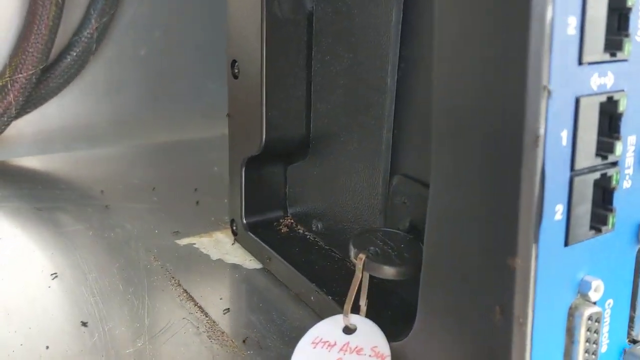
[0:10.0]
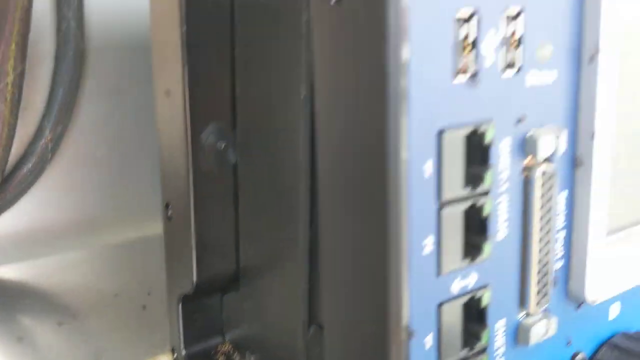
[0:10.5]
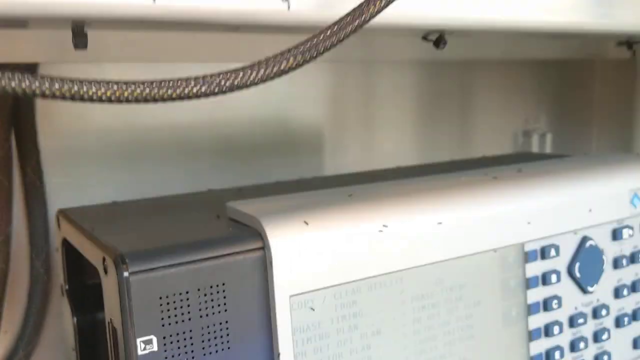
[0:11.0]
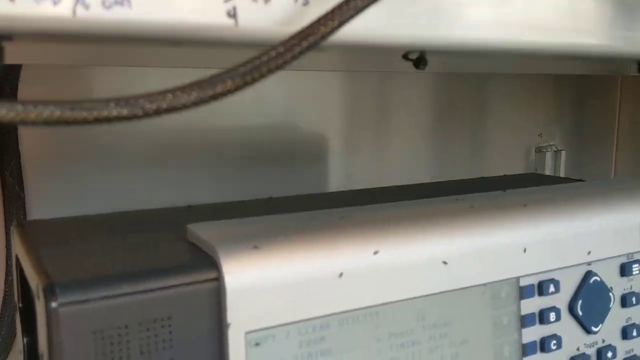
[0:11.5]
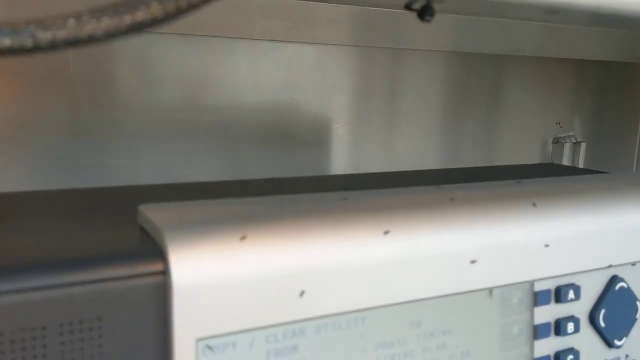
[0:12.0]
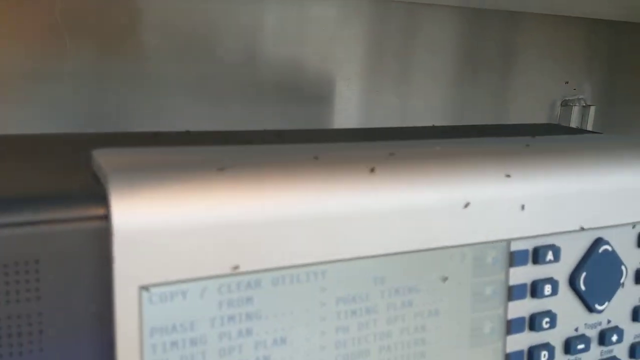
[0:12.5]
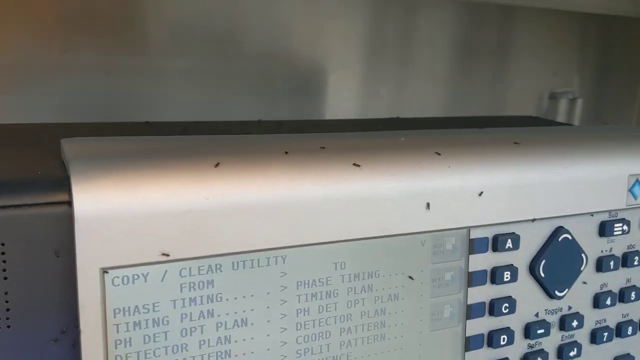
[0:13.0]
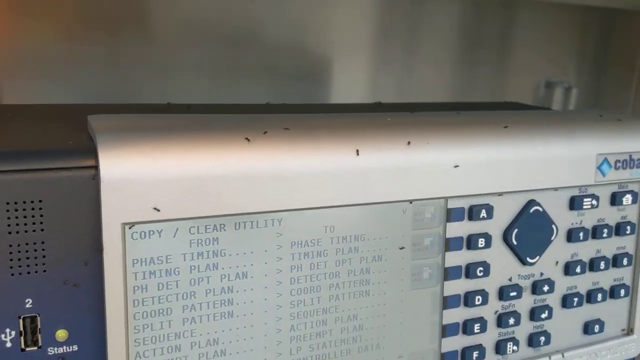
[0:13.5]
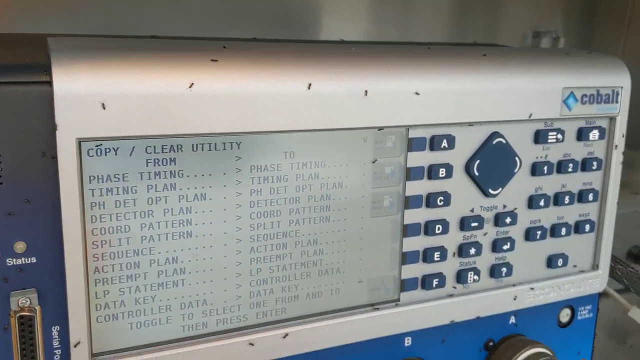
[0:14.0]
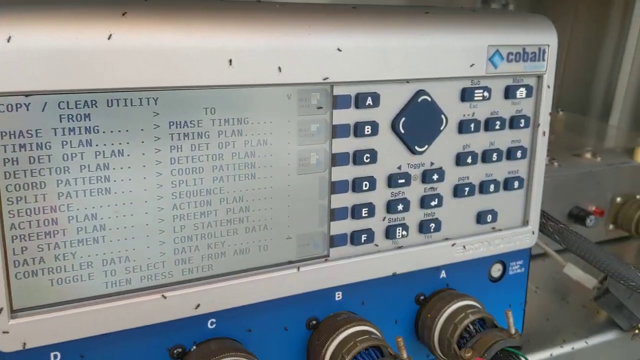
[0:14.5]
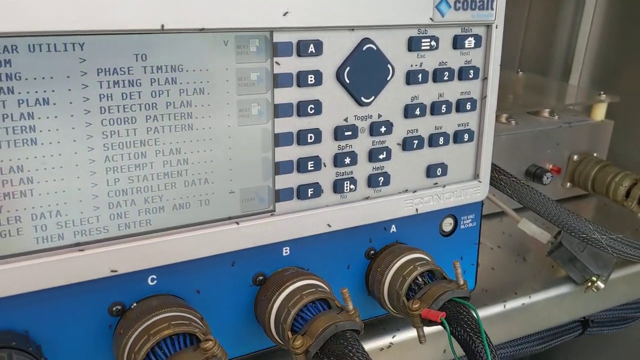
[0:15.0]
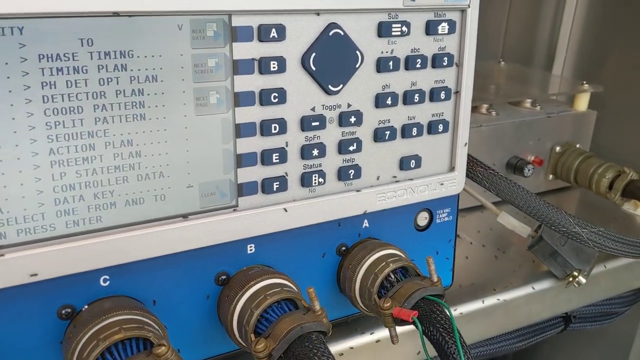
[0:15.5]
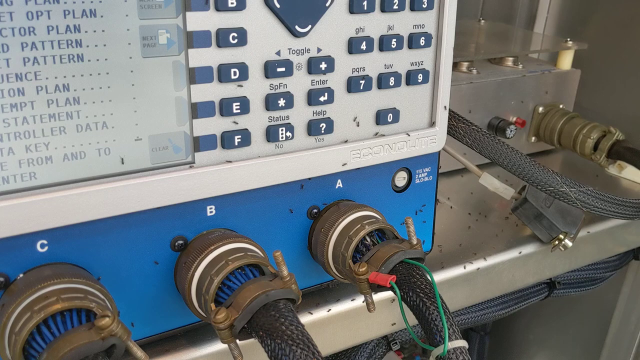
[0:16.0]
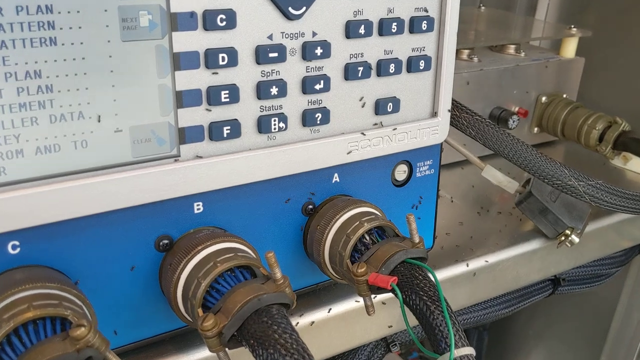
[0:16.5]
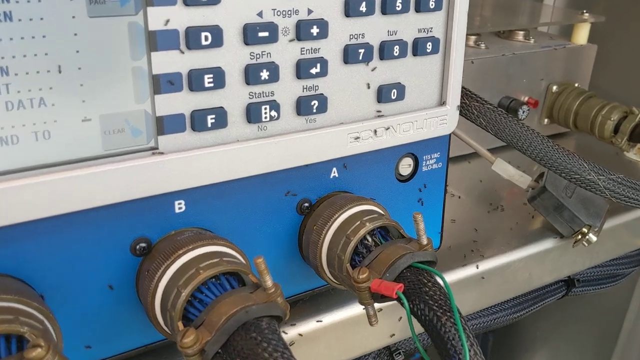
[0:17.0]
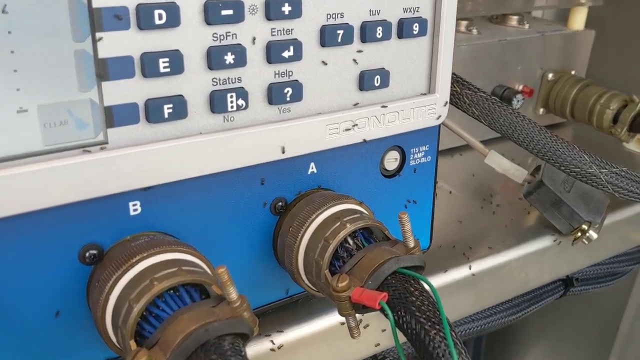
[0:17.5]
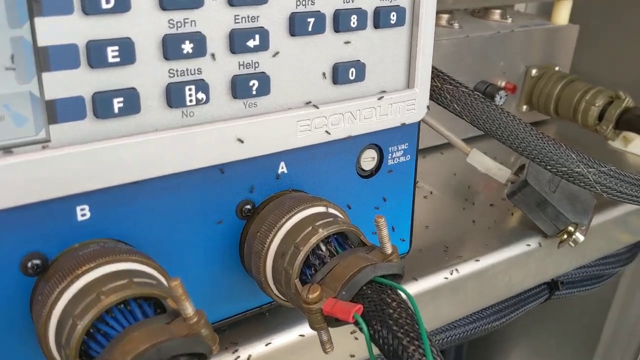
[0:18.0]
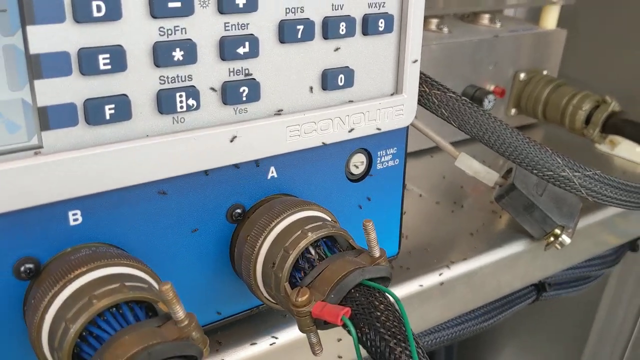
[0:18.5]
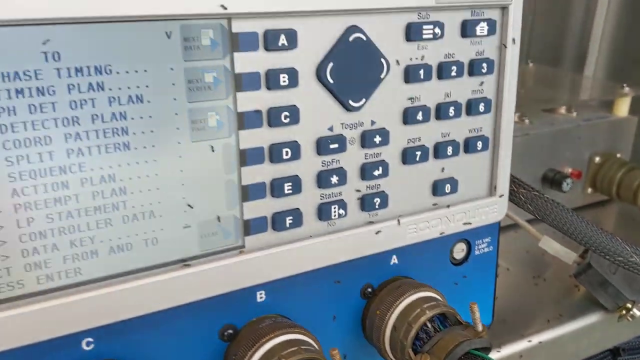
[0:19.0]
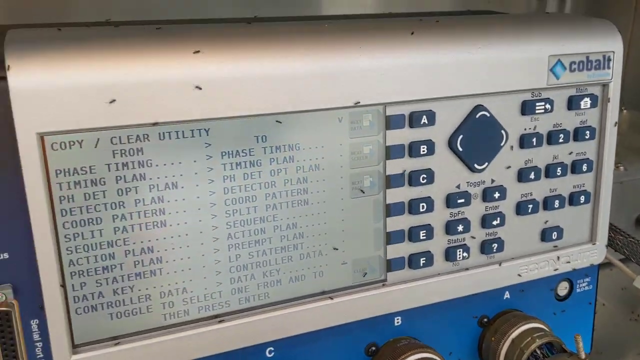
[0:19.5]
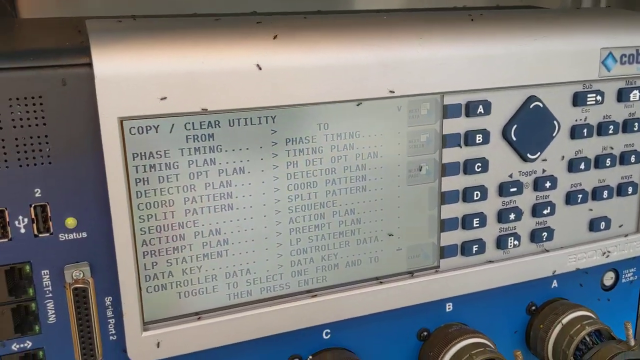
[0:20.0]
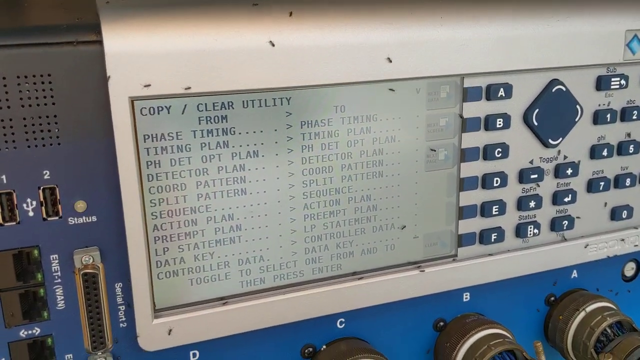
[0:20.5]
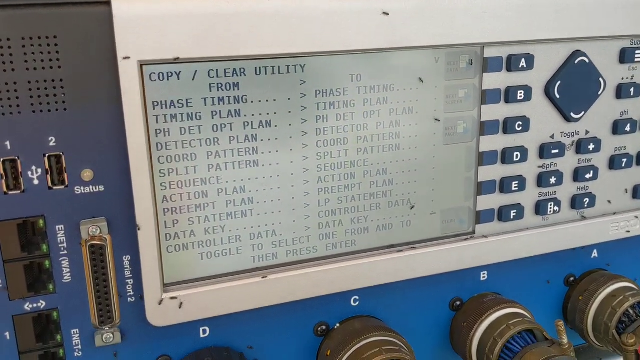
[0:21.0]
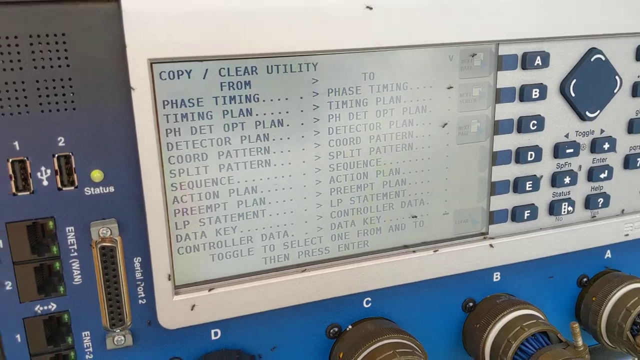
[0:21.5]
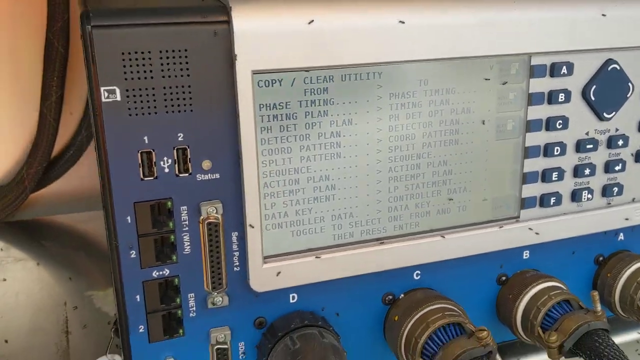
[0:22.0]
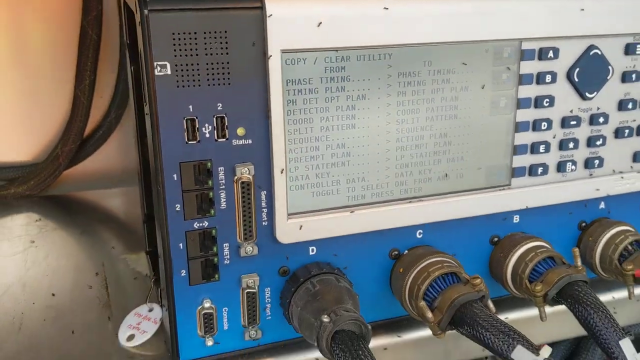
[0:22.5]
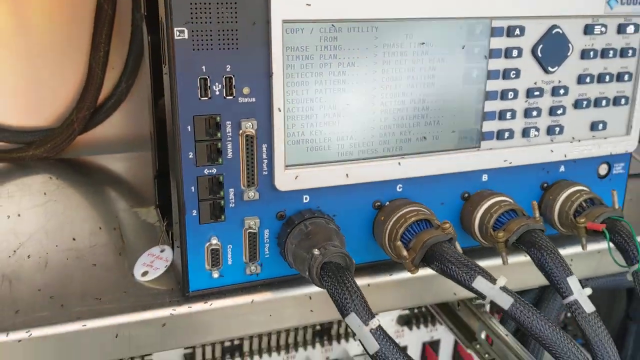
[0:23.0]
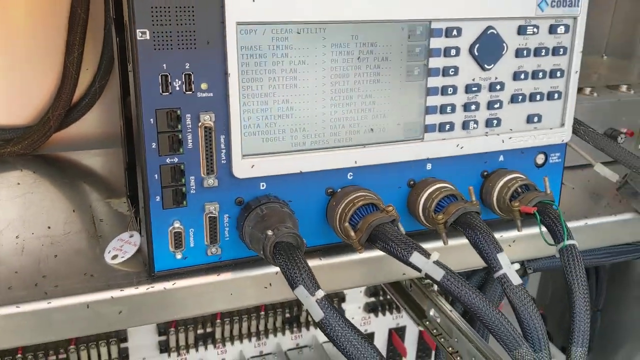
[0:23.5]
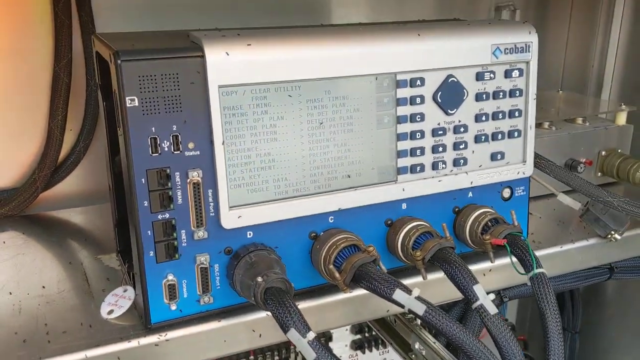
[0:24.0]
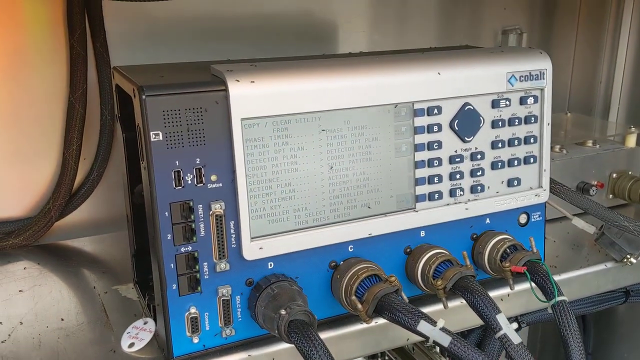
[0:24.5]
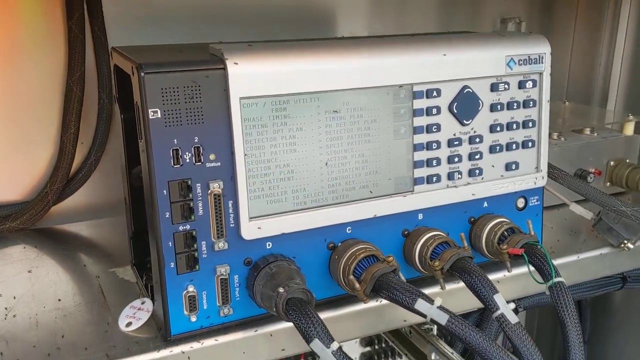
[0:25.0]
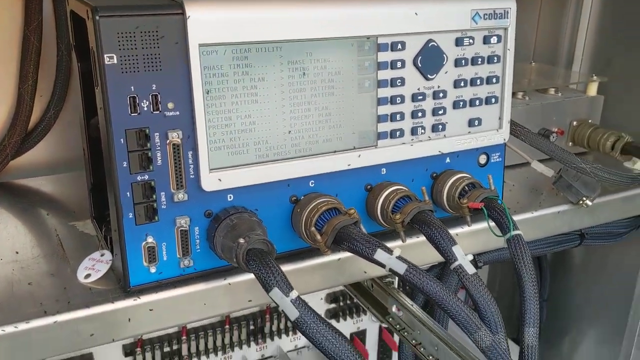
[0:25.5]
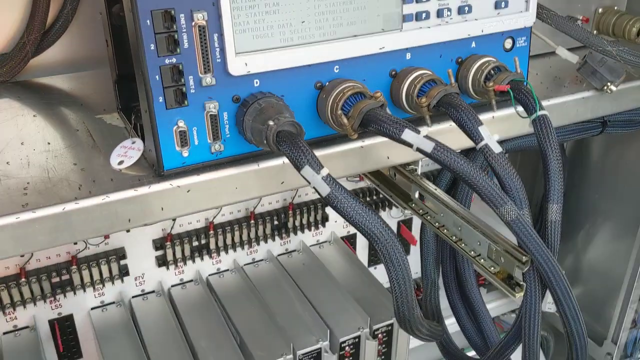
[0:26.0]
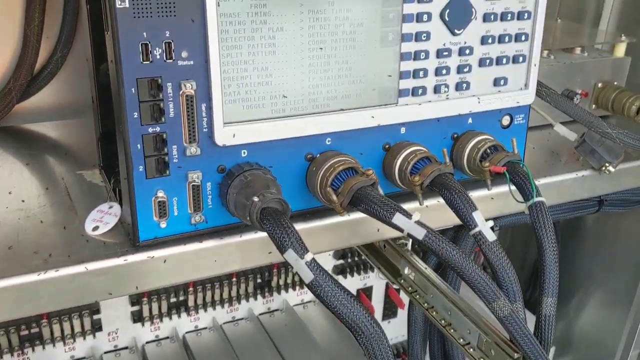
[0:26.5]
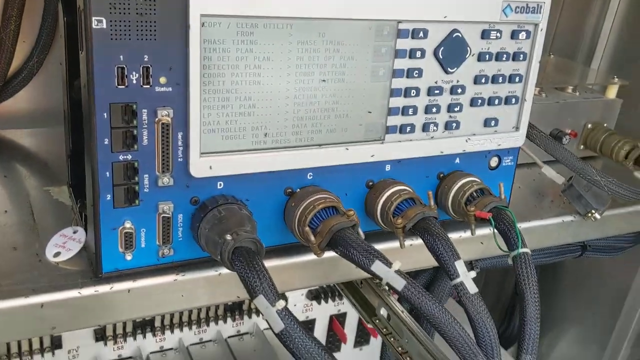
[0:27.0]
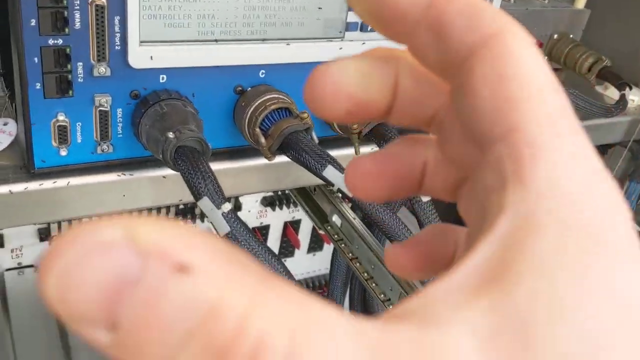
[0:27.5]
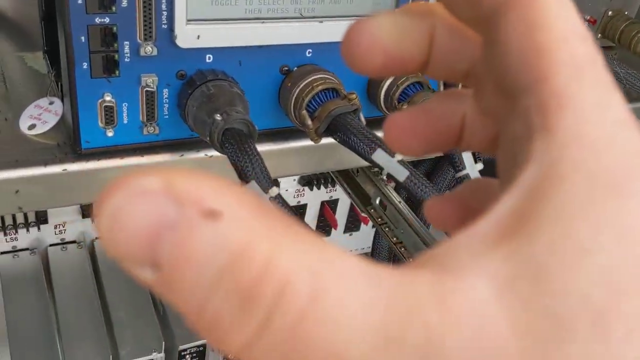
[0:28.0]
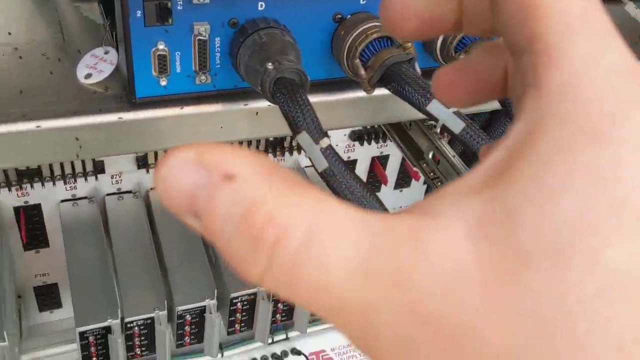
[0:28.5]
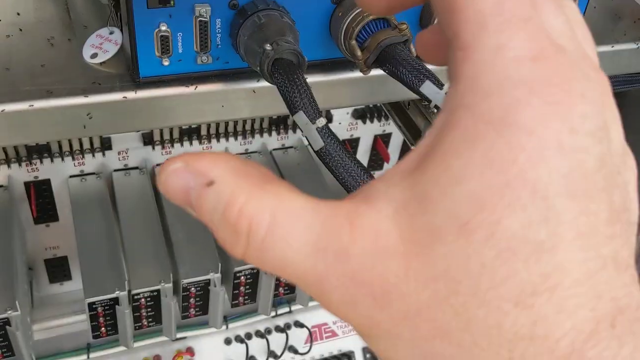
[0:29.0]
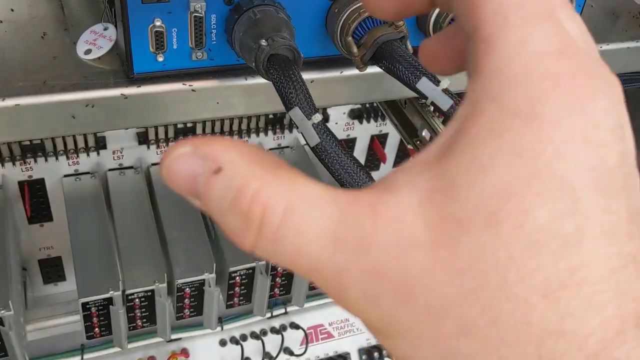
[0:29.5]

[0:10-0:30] The camera pans toward the machine, showing that the ants moving around are black. The blue machine has a display, with text including "timing plan" and "split patterns", and the letters A, B, C, D, E, F appear on it. The camera pans in again to show that the ants are everywhere on the machine, covering it all over. A human hand, apparently a Caucasian man's, approaches and seems to touch the machine's cord. The camera pans along the side to show the black left-hand side of the machine, then moves to the end of the machine to show the blue display. Ants are everywhere on the machine.